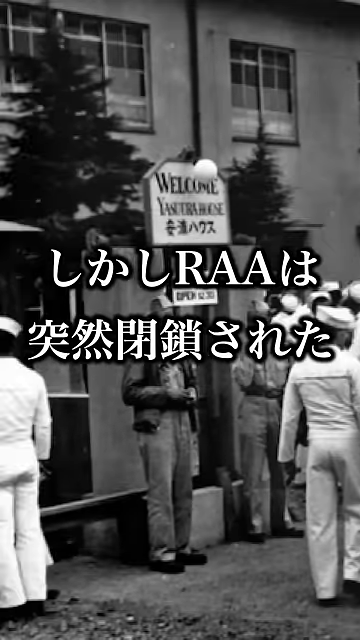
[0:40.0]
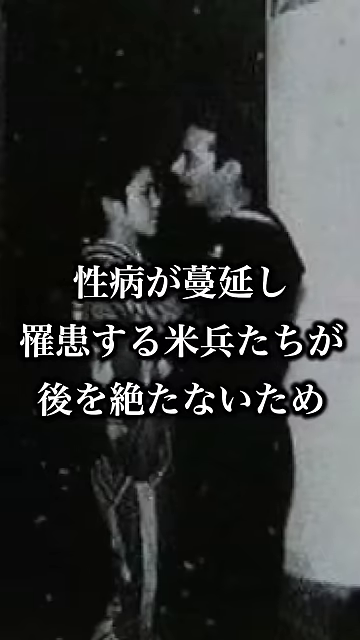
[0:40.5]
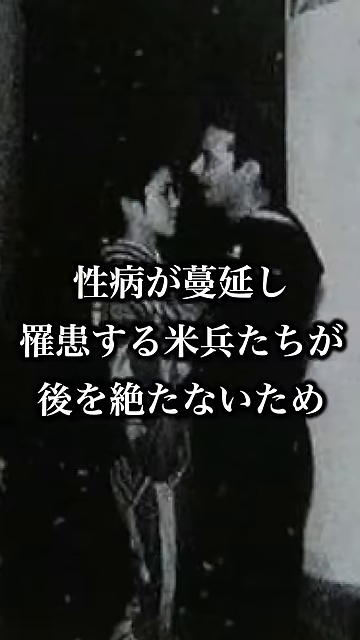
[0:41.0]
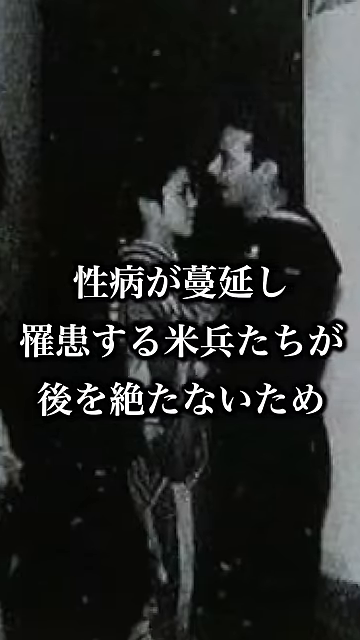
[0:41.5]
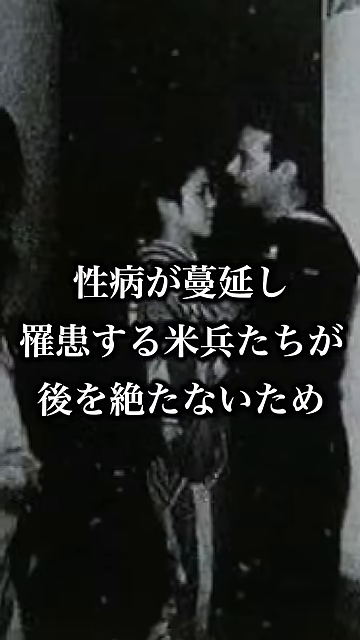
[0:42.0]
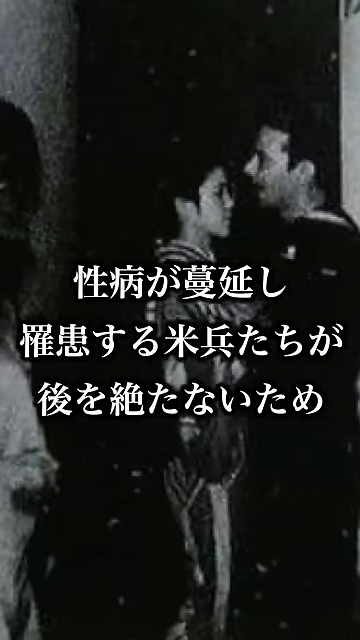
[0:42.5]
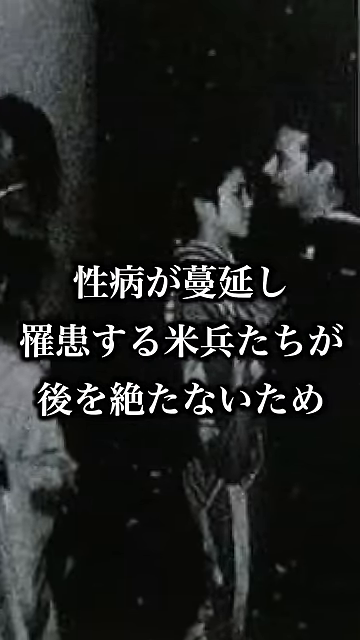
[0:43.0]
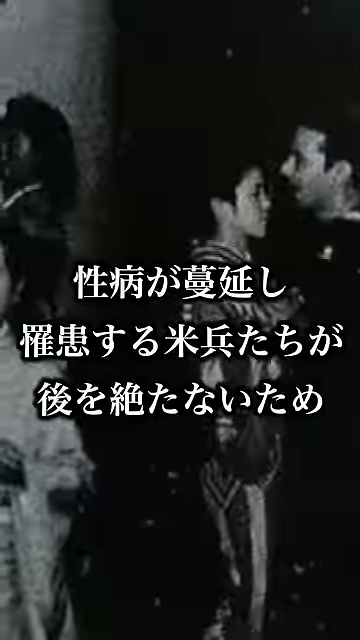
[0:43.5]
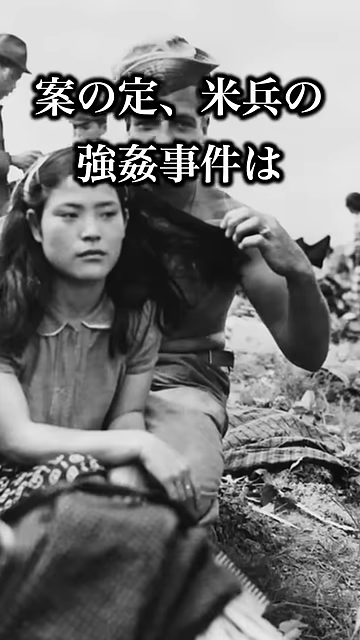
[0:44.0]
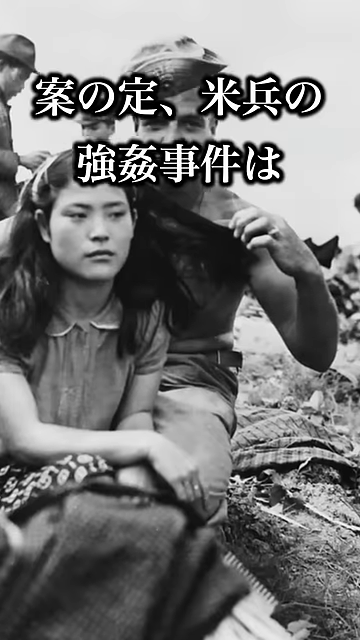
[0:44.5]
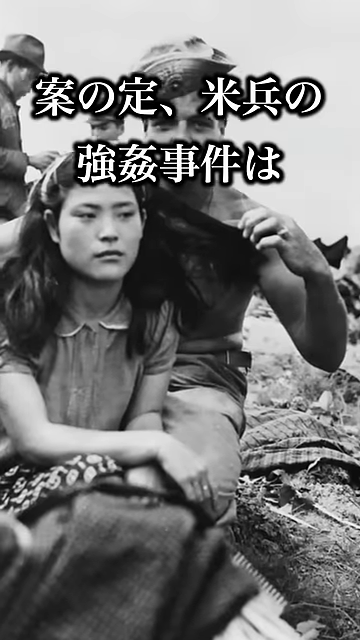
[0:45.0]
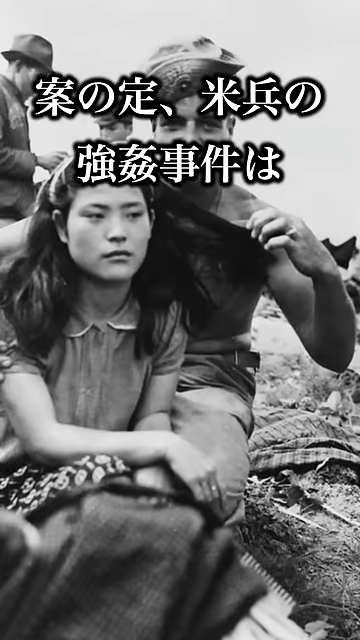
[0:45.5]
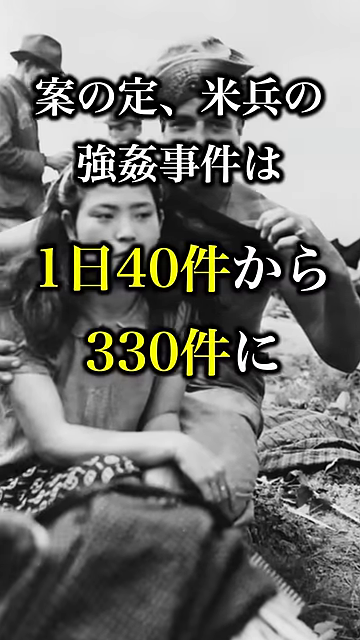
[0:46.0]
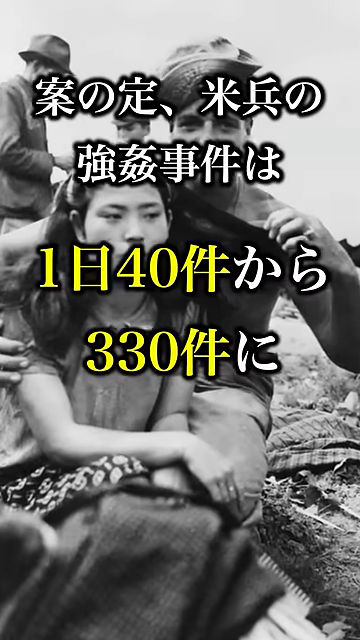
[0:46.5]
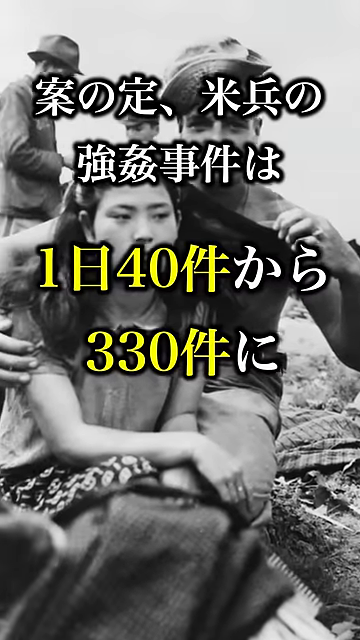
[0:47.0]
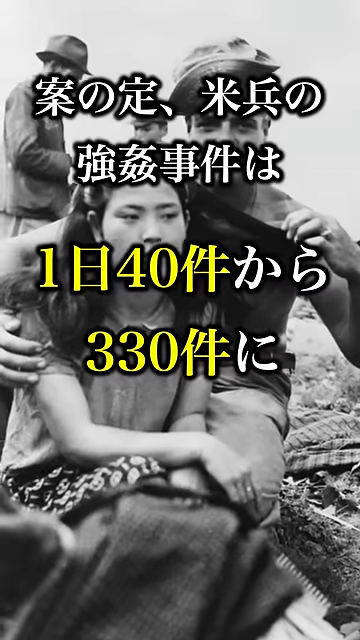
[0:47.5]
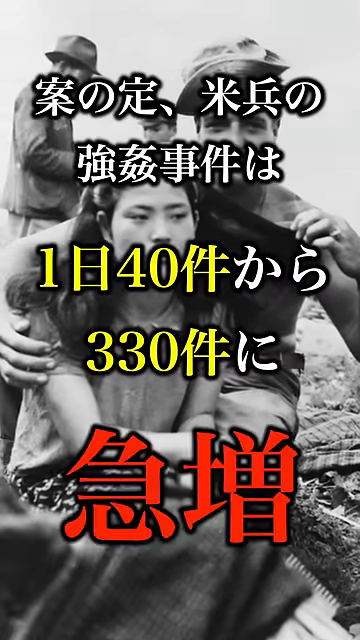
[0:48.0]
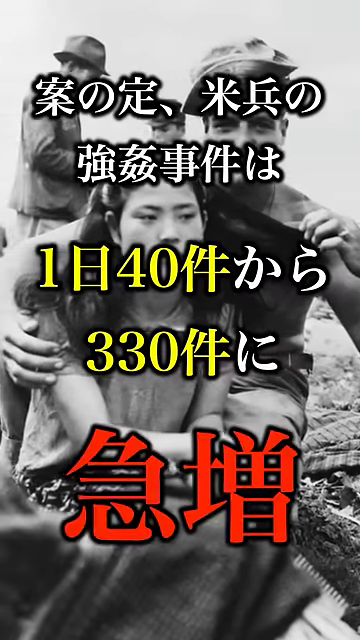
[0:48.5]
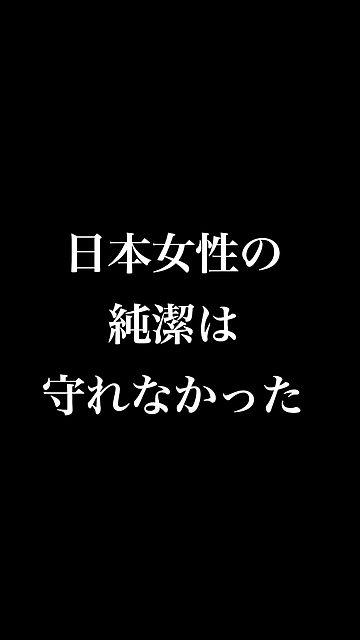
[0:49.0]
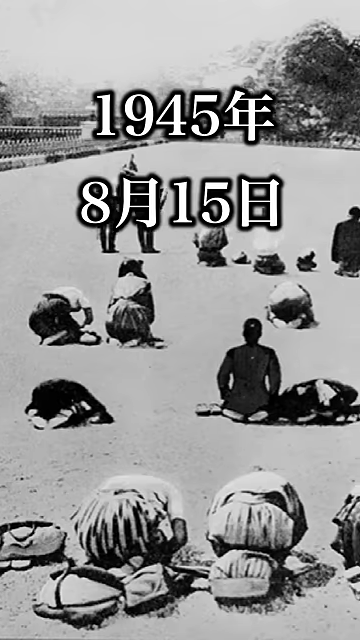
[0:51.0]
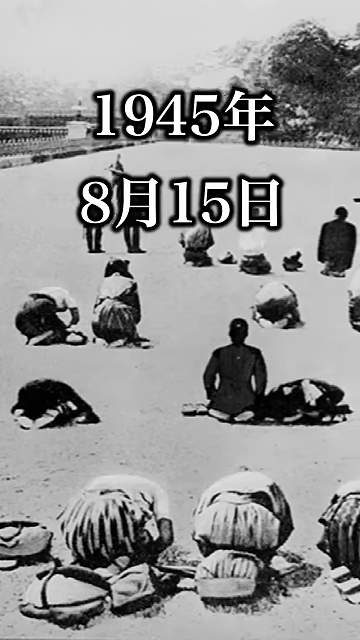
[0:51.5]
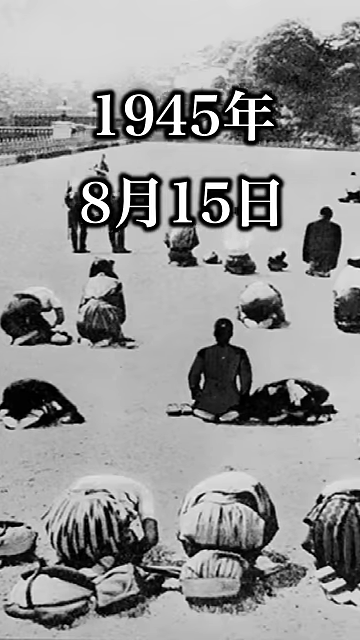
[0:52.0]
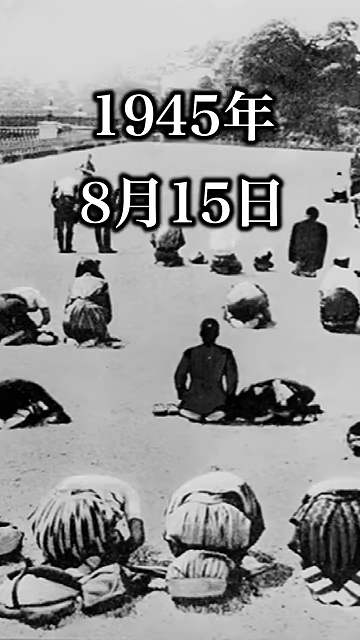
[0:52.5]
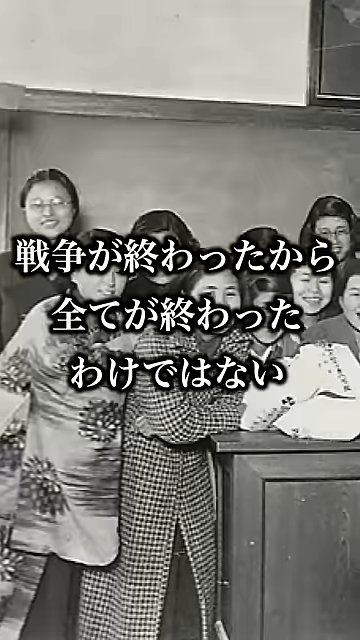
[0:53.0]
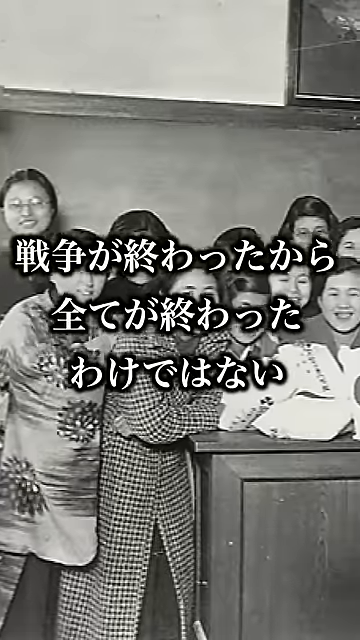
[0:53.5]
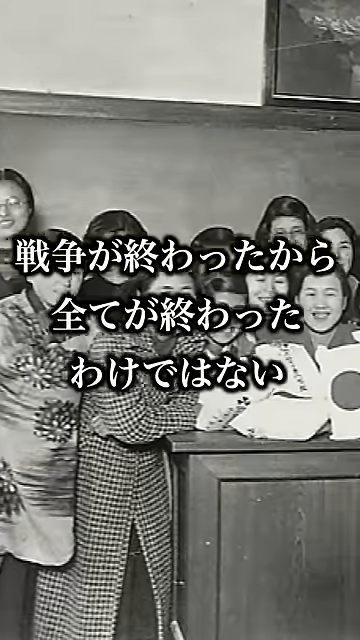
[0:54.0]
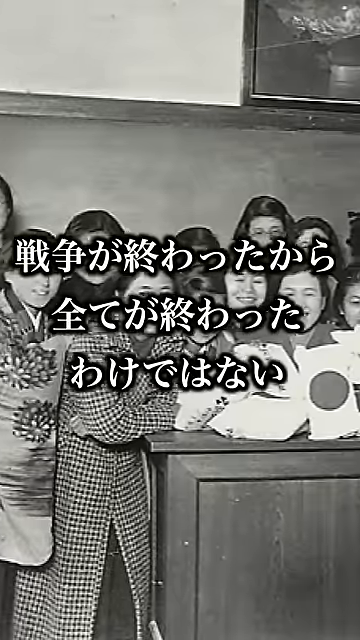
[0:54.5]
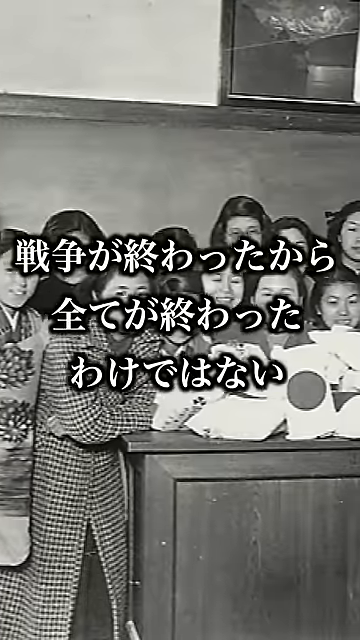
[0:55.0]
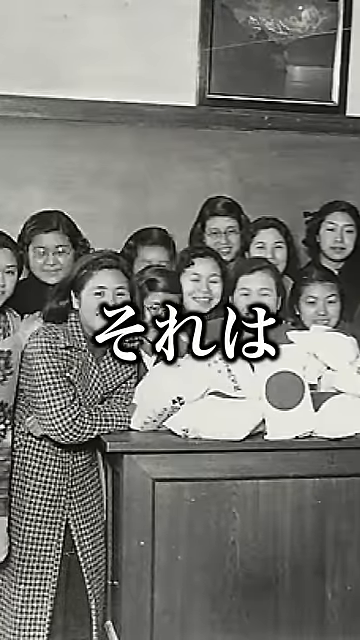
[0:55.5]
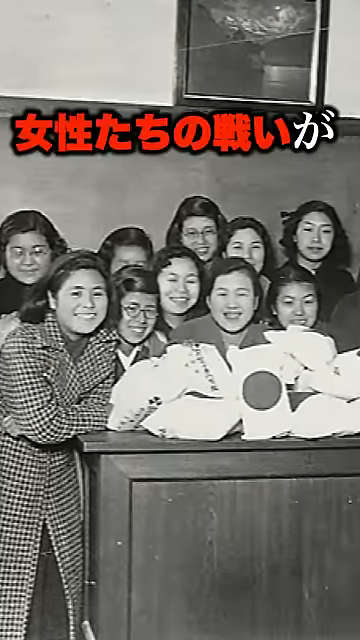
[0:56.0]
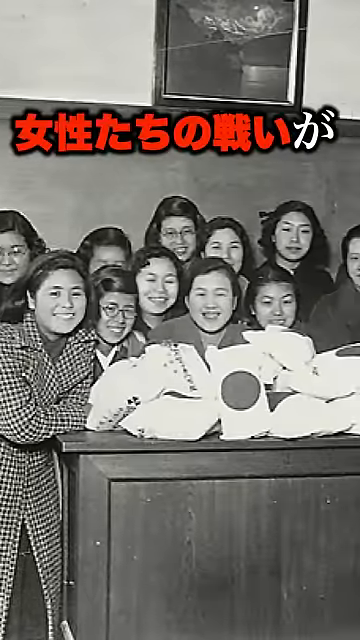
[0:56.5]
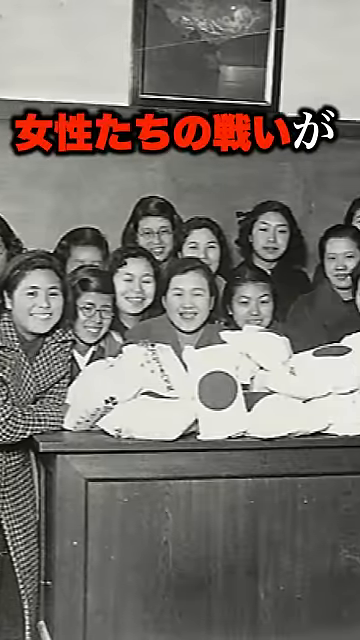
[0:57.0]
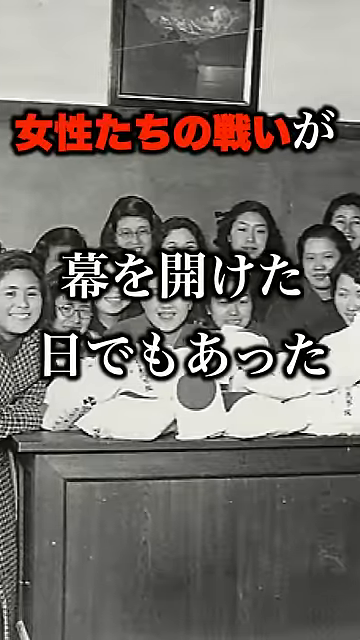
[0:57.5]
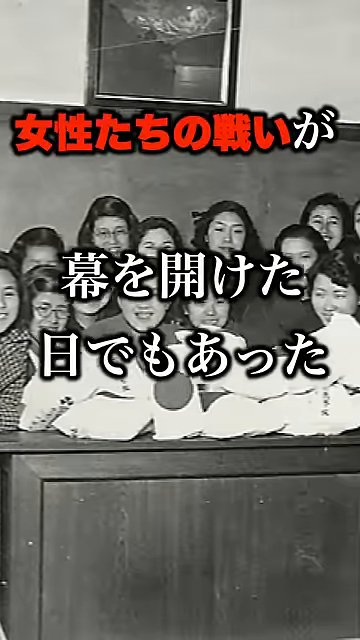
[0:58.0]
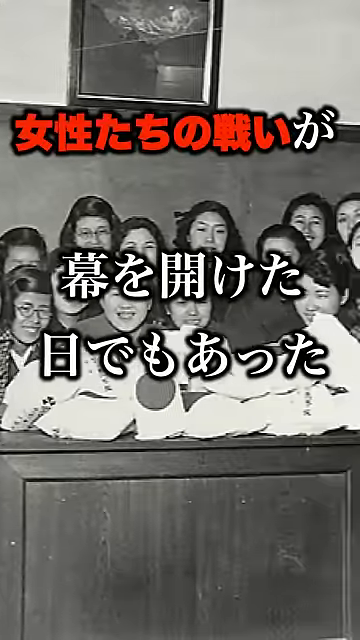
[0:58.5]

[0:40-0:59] Pictures of couples dancing appear, showing a man and a woman. In the next picture, a woman looks really forlorn and a downcast man is kind of smiling. The video flashes to words on the screen, then shows people praying, kind of knelt down, some of them leaned forward, out in a nature-type setting or some type of flat park. It flashes to a school scene with kids or a younger generation standing around an older lady in front of a chalkboard, with a flag symbol in front of them. The pictures all look to be historical, as they are all black and white photos.